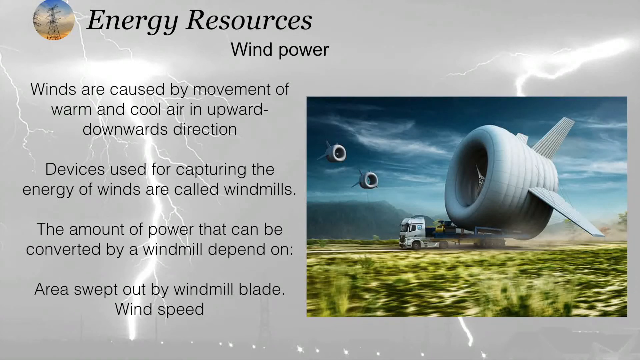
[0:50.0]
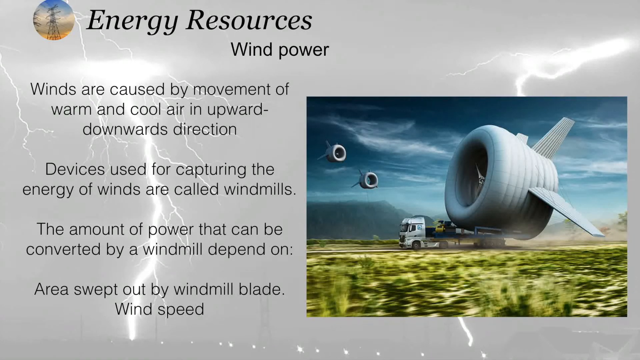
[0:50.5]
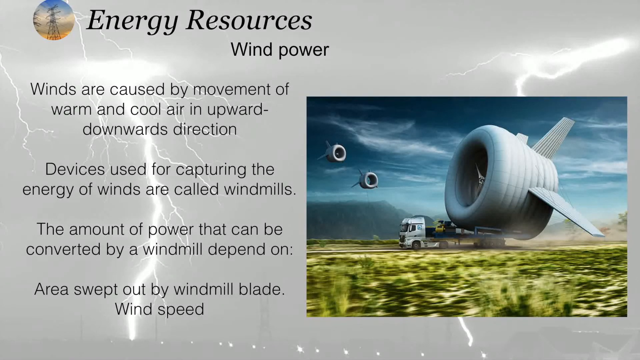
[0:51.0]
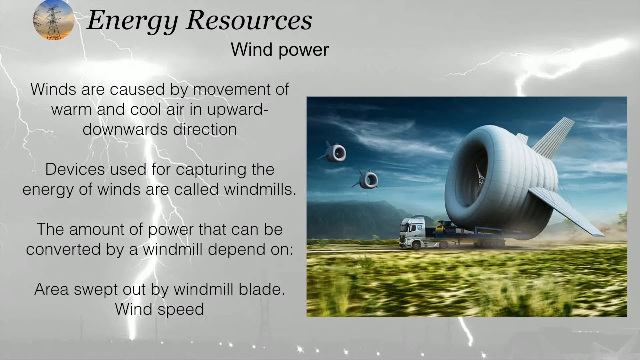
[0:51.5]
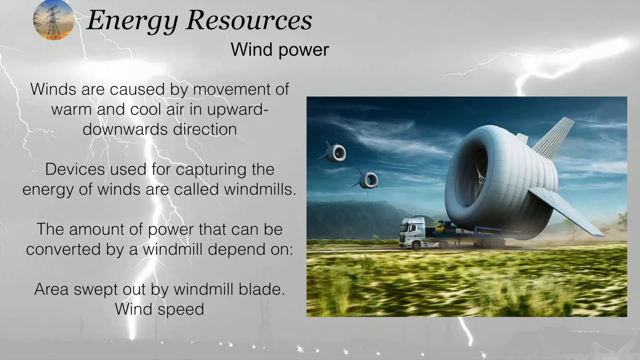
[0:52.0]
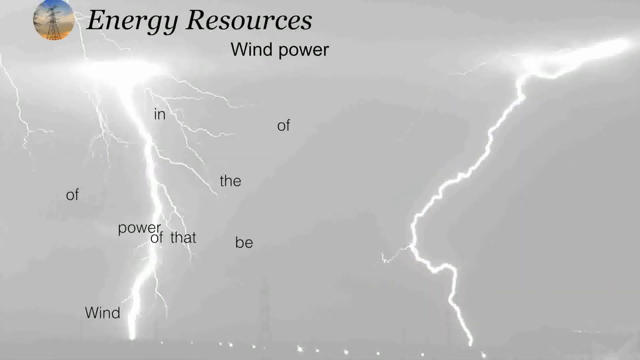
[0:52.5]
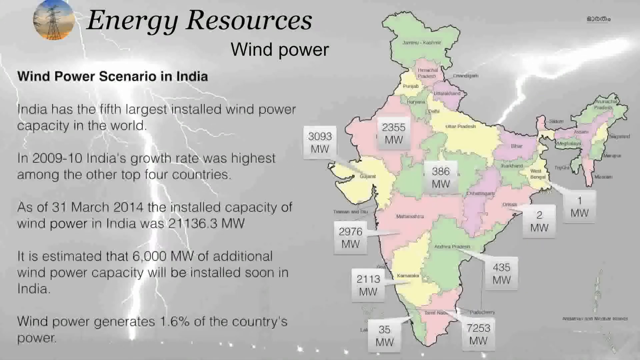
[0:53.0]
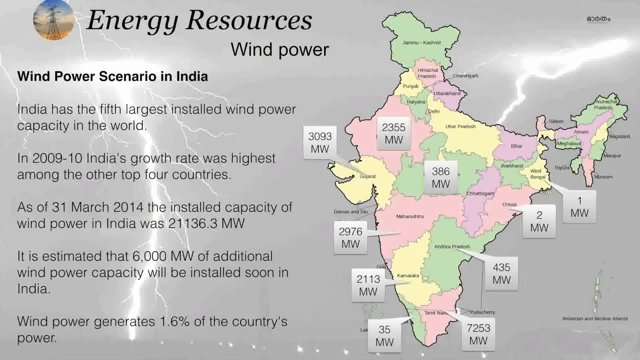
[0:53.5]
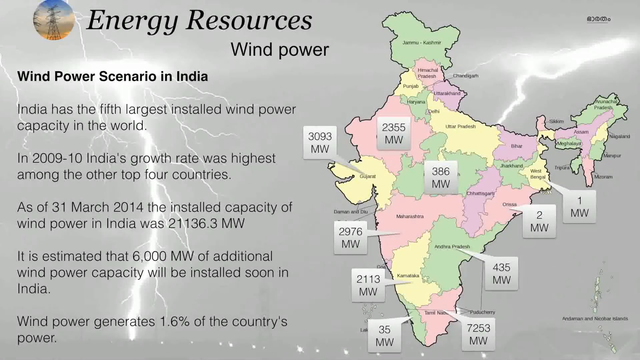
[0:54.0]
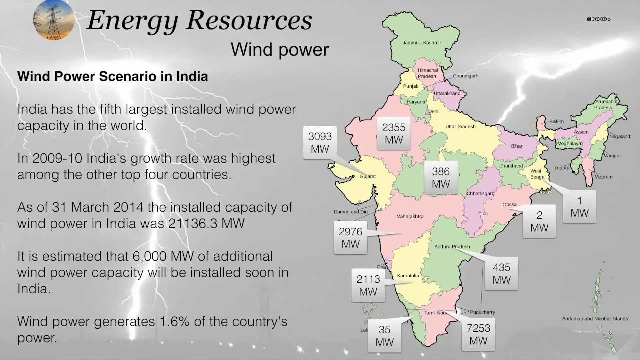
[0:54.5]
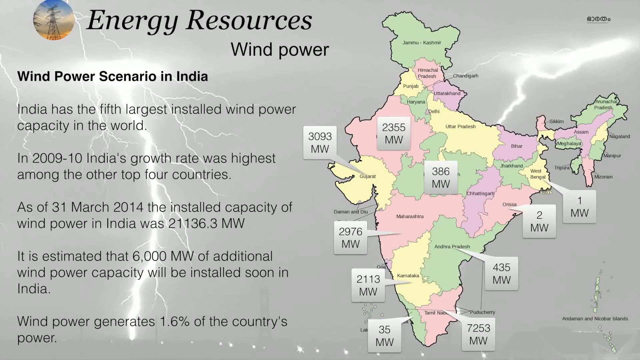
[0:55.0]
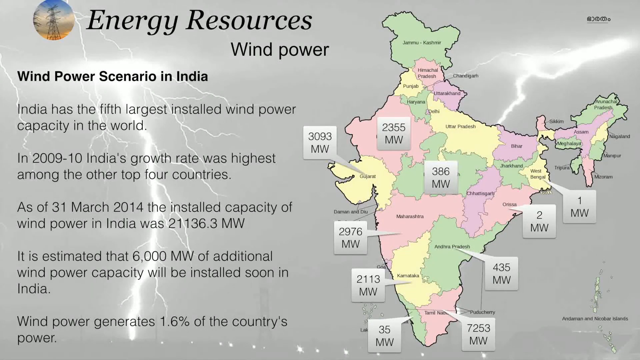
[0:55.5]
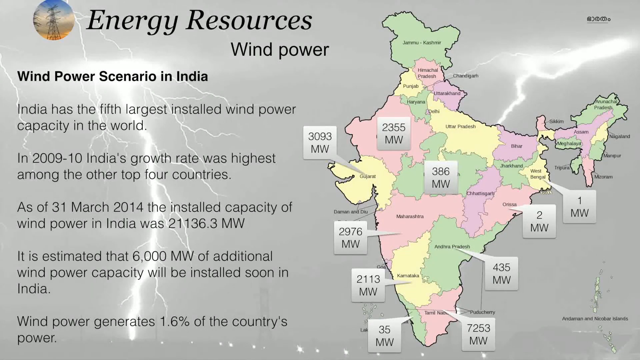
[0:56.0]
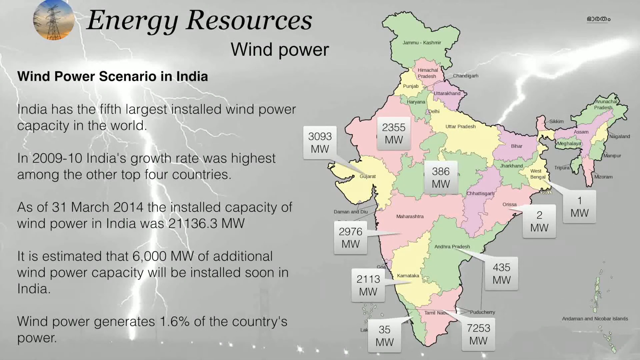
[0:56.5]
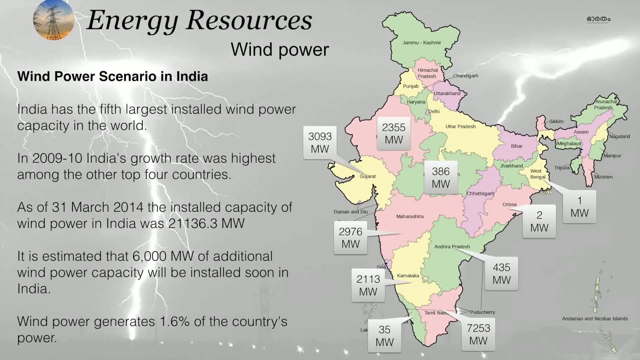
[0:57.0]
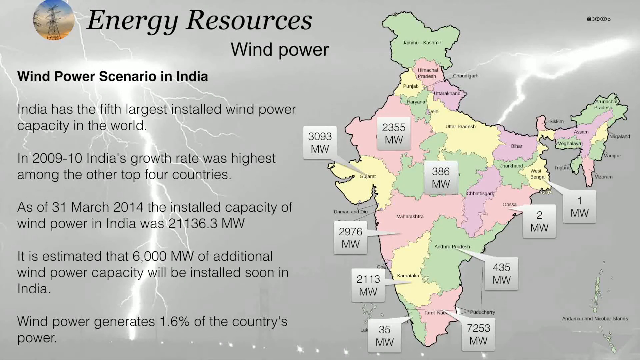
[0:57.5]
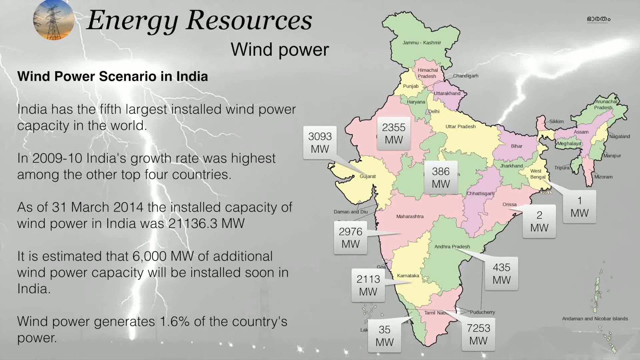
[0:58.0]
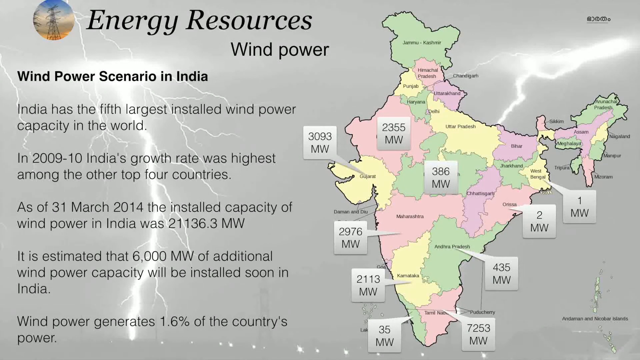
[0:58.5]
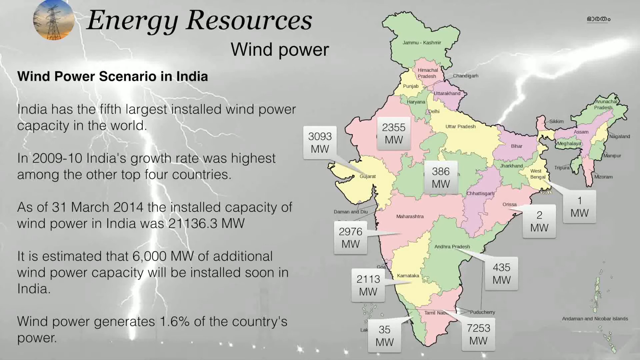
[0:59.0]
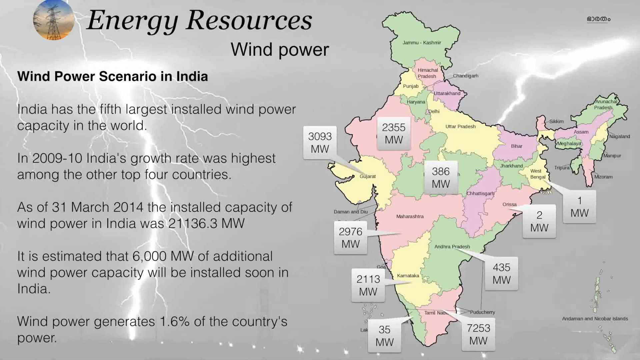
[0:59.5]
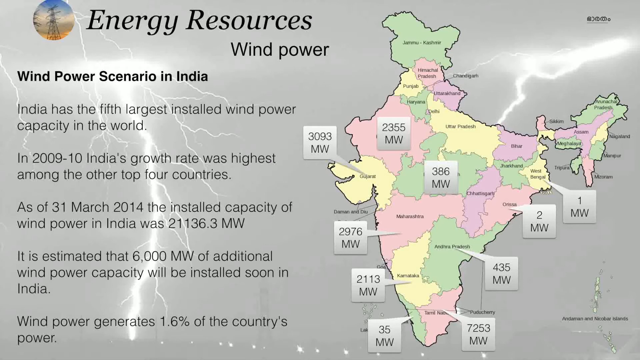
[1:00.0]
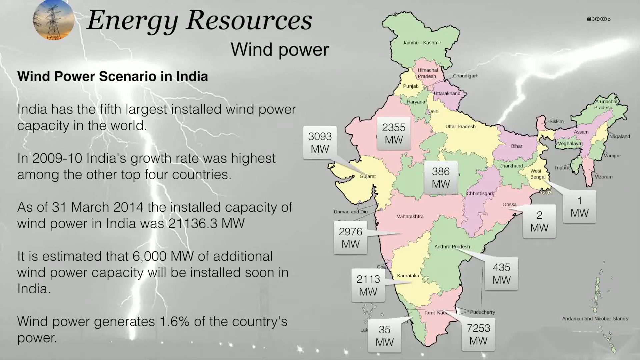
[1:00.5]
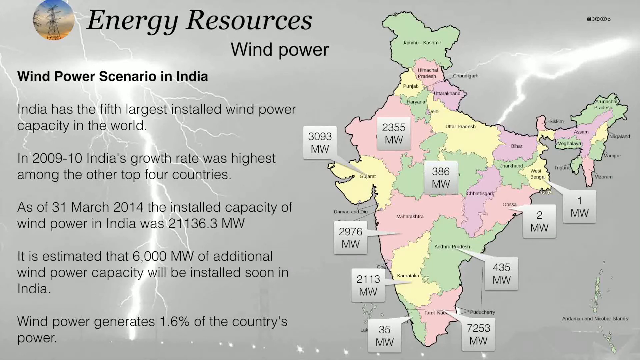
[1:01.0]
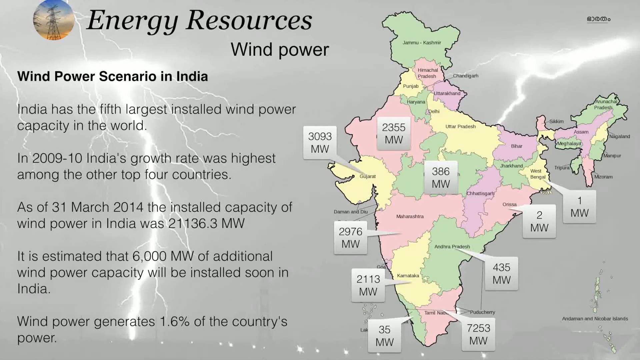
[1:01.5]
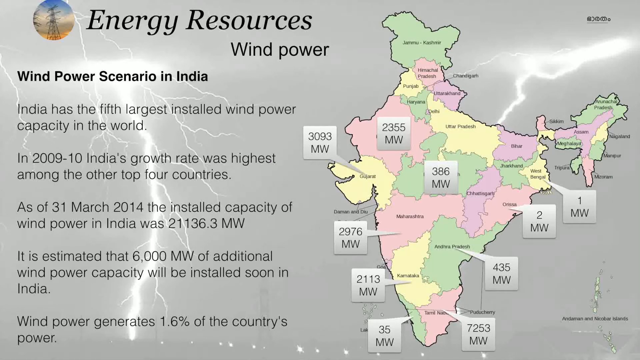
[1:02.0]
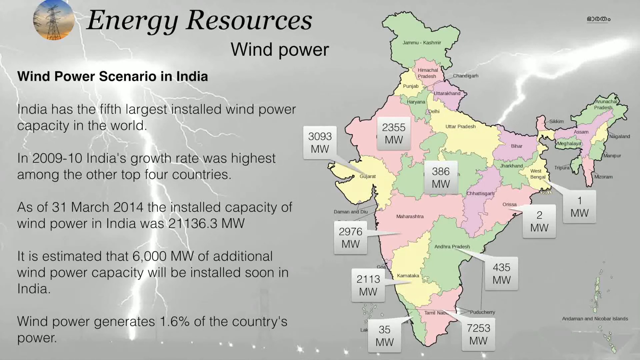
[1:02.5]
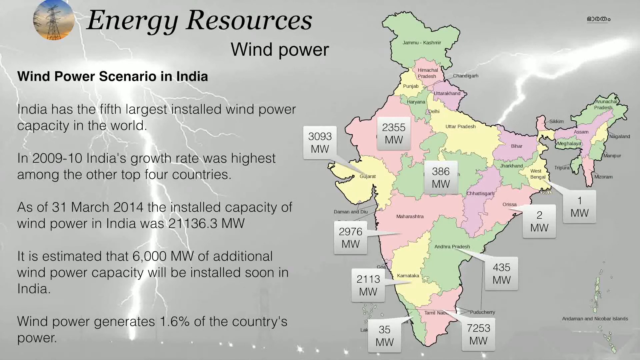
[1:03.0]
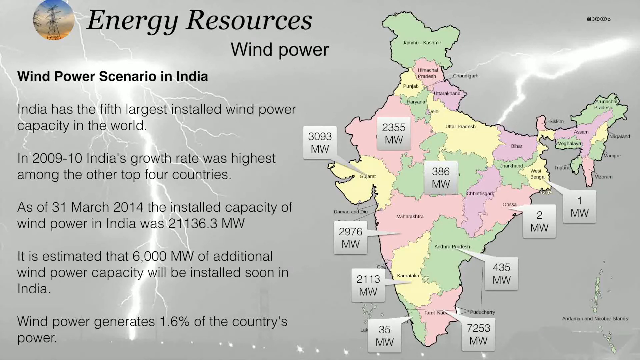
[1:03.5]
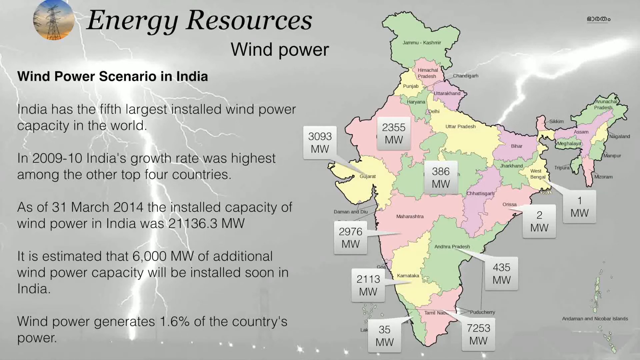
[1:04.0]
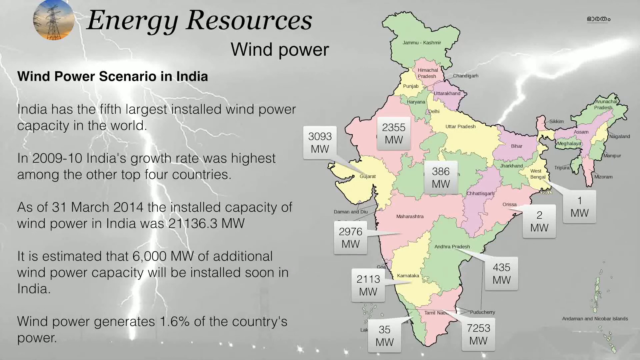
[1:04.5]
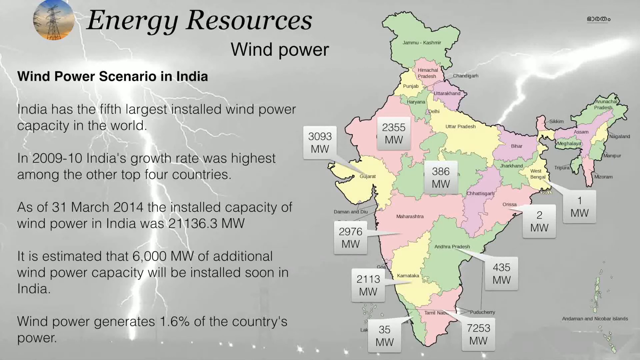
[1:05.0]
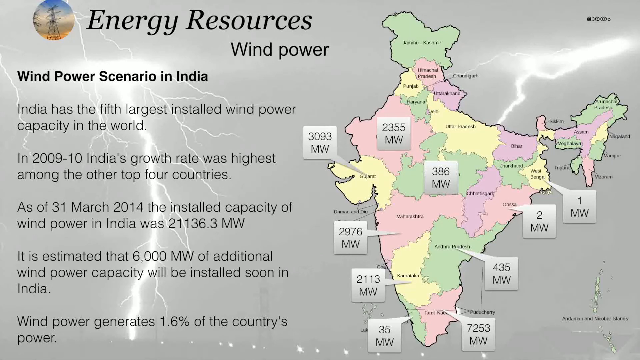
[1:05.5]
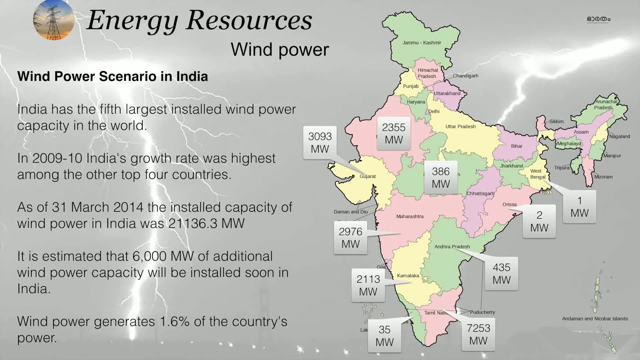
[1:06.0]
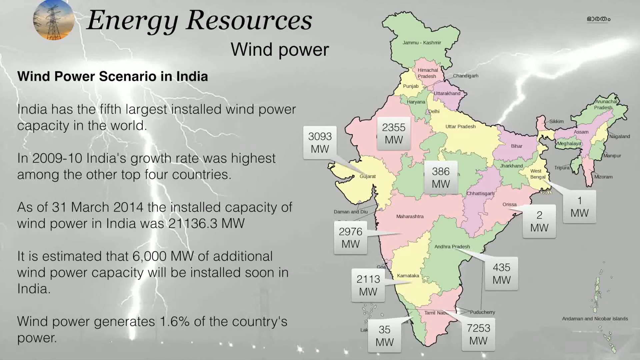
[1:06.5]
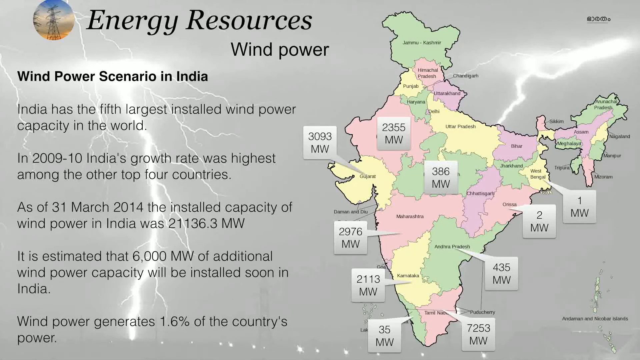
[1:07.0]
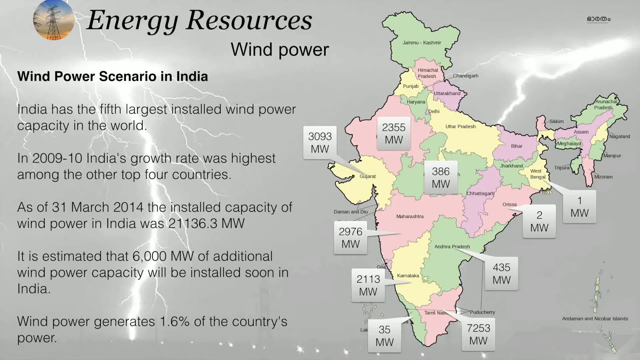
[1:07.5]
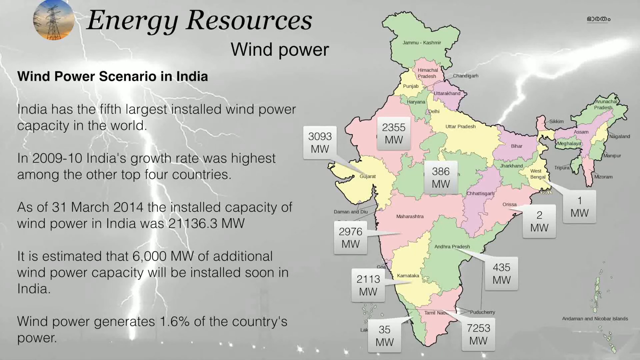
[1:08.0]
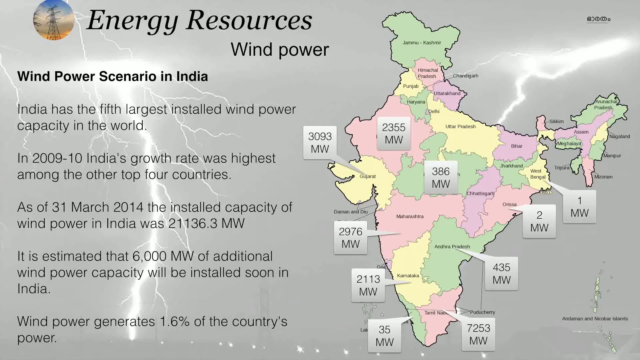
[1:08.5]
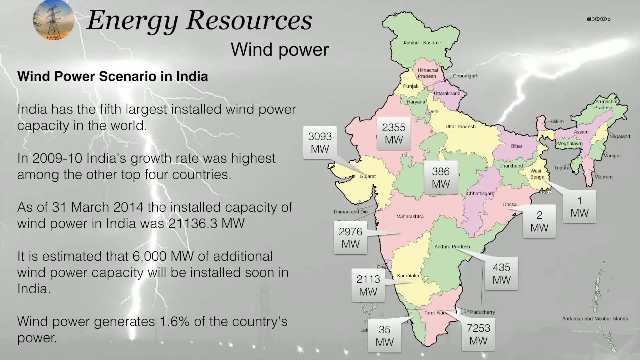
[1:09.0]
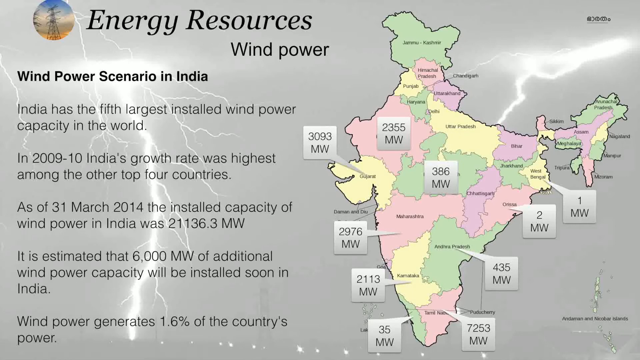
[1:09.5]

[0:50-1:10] Some of the words on the left side shift to different positions. The left side now reads "wind power scenario in India," with five separate sections of one line of information each. On the right side is a map of India colored partly green, pink, purple and yellow, with letters marking the different countries or cities. Above some of these are little gray squares containing numbers with "MW" under them; ten of these are scattered about the country. Under the title, the lines read: "India has the fifth largest installed wind power capacity in the world"; "in 2009 through 2010, India's growth rate was highest among the top four countries"; "as of 31st March 2014, the installed capacity of wind power in India was 21,136.3 MW"; "it is estimated that 6,000 MW of additional wind power capacity will be installed soon in India"; and at the bottom, "wind power generates 1.6% of the country's power."